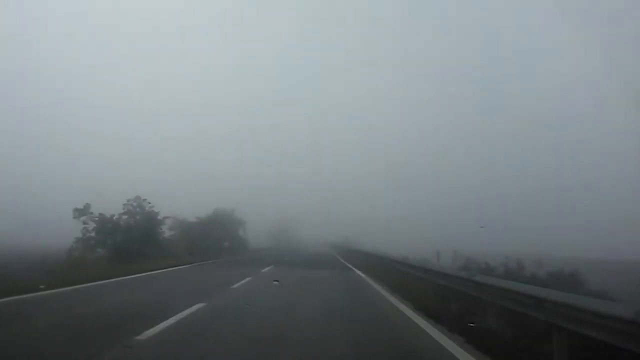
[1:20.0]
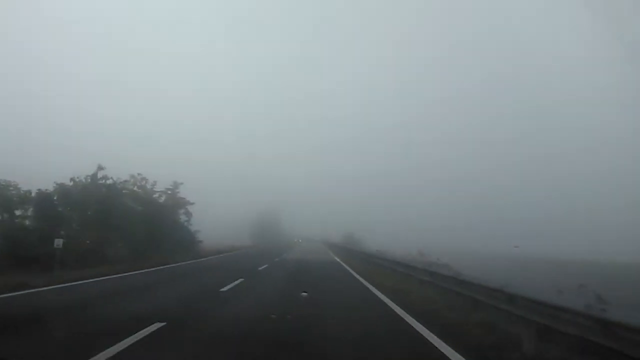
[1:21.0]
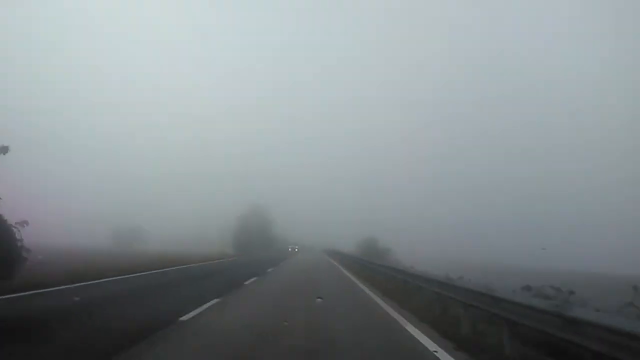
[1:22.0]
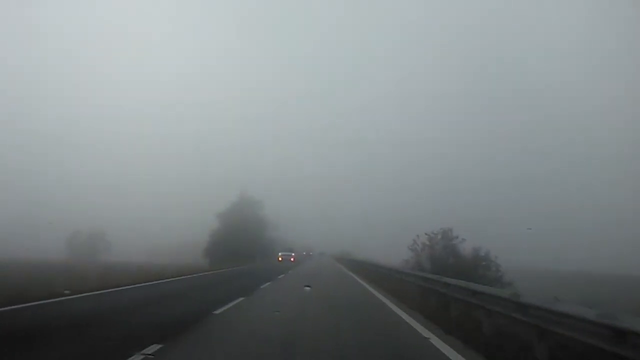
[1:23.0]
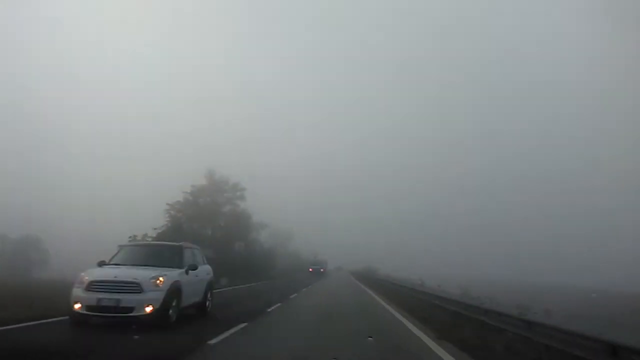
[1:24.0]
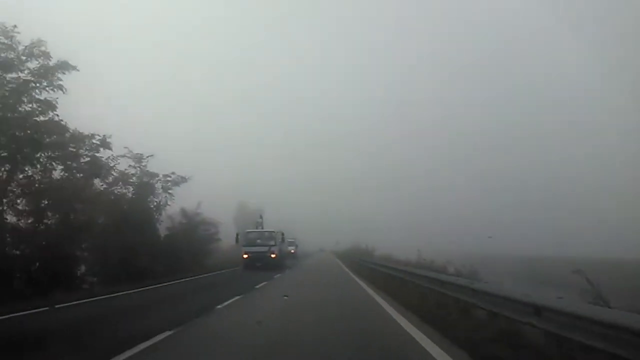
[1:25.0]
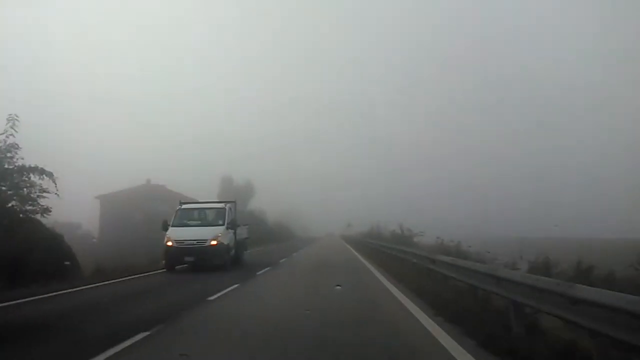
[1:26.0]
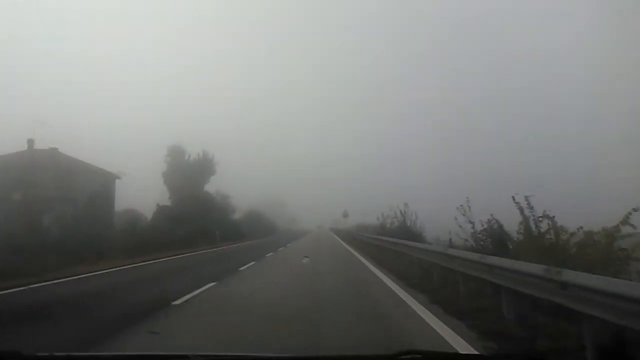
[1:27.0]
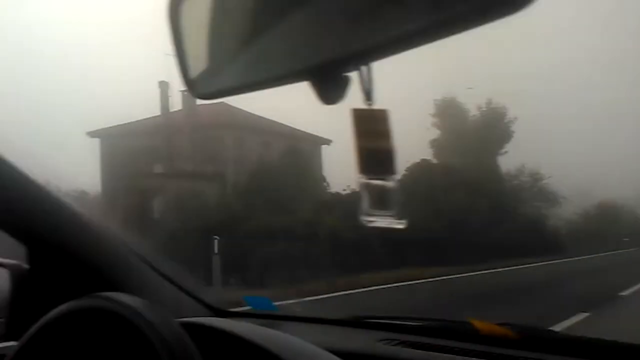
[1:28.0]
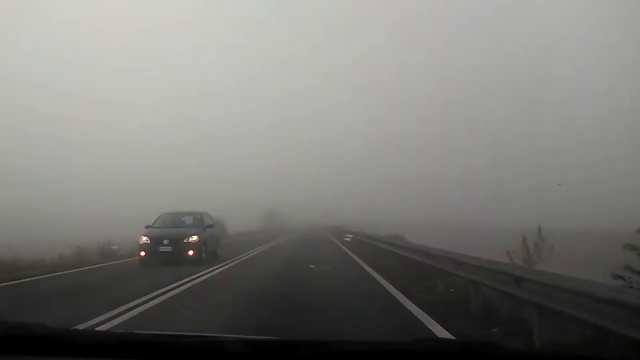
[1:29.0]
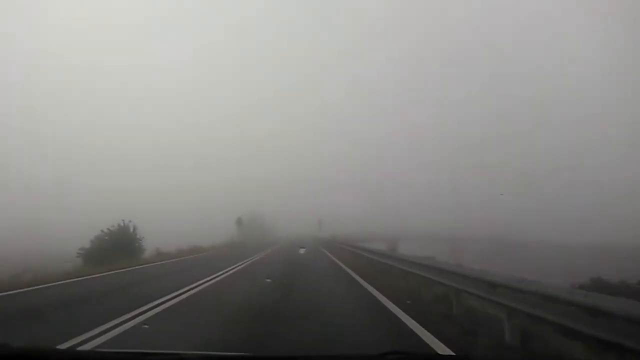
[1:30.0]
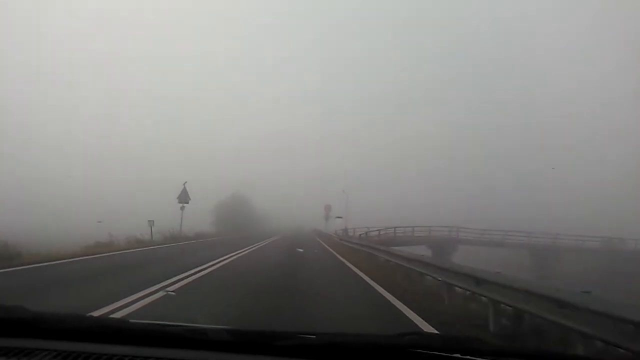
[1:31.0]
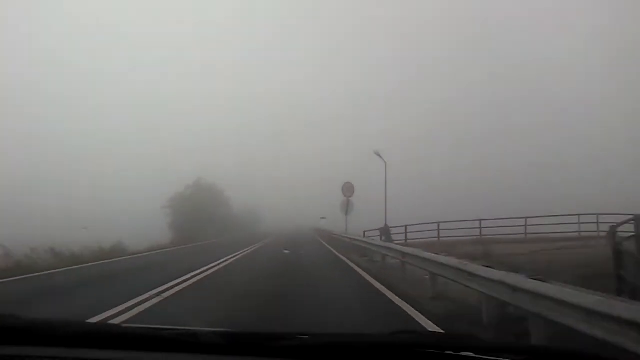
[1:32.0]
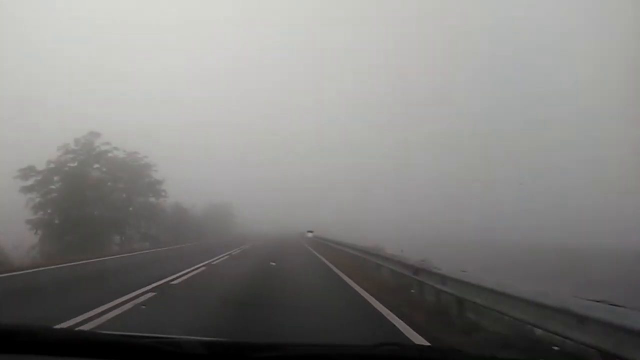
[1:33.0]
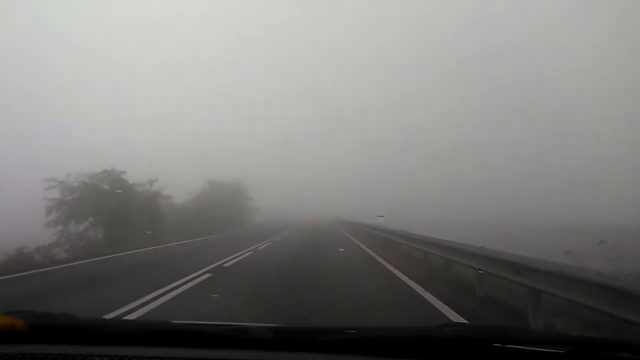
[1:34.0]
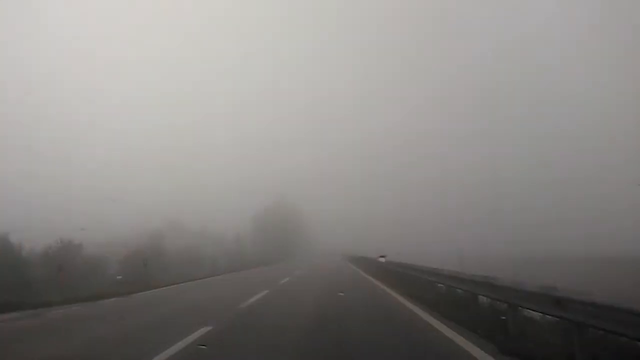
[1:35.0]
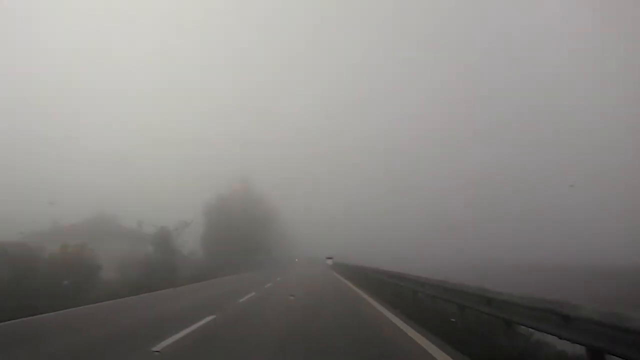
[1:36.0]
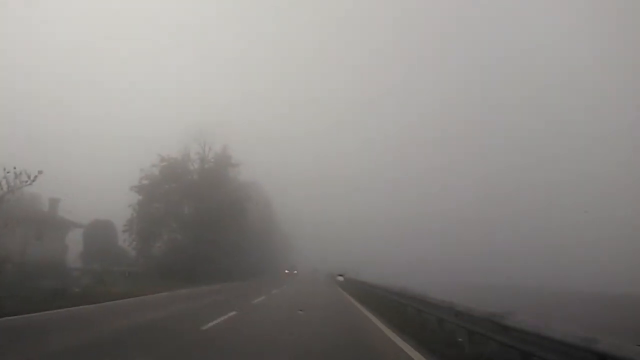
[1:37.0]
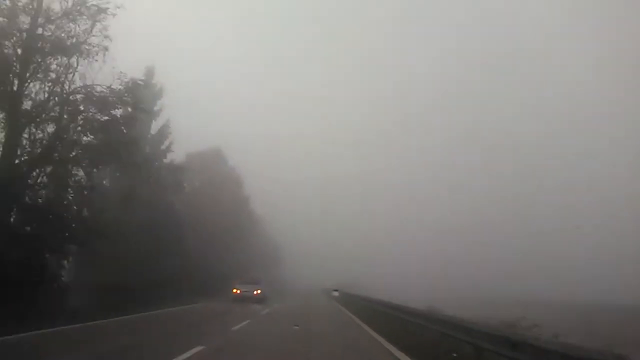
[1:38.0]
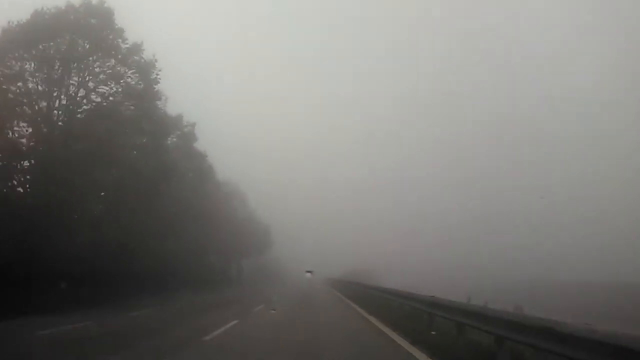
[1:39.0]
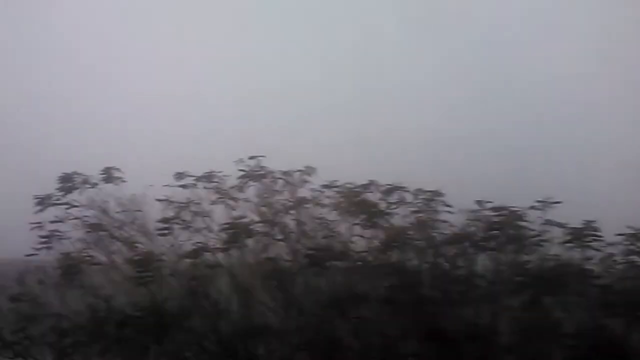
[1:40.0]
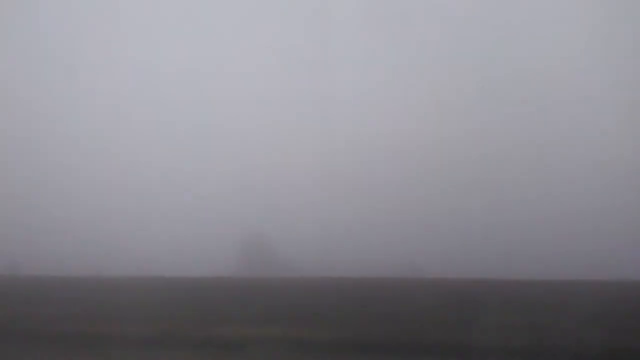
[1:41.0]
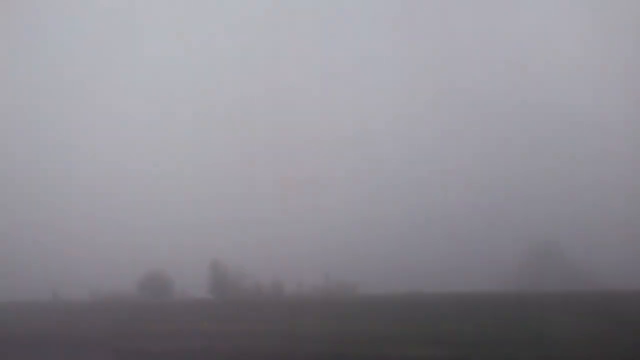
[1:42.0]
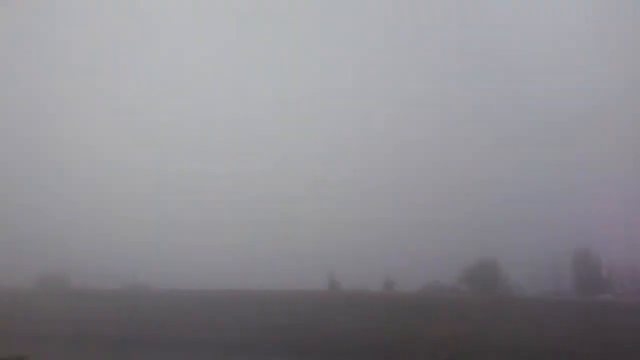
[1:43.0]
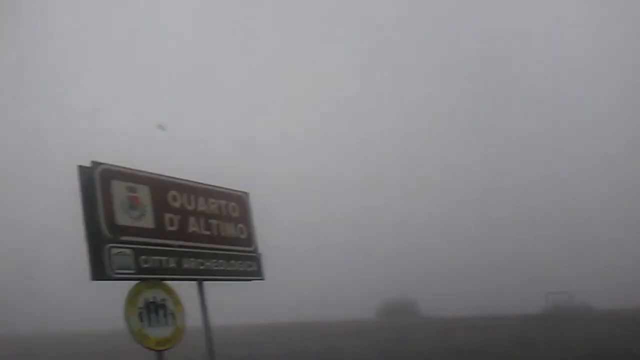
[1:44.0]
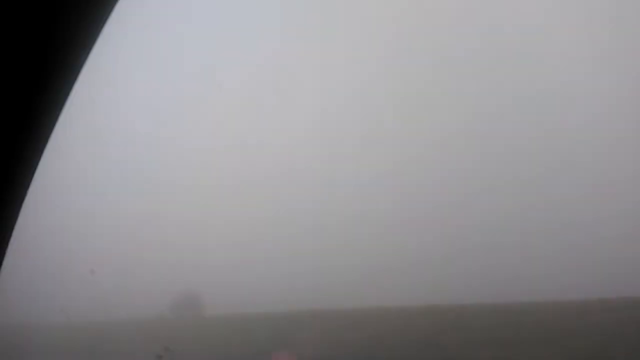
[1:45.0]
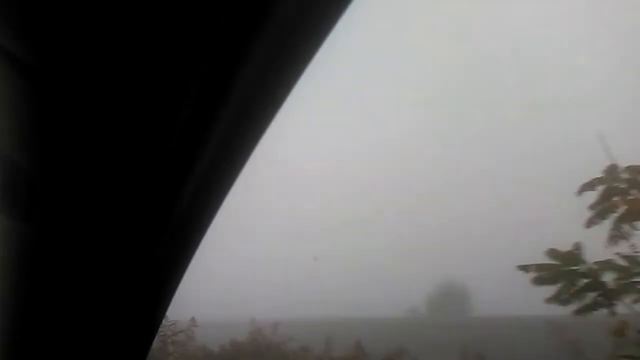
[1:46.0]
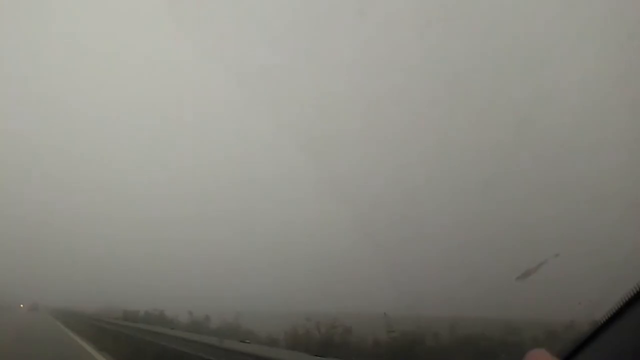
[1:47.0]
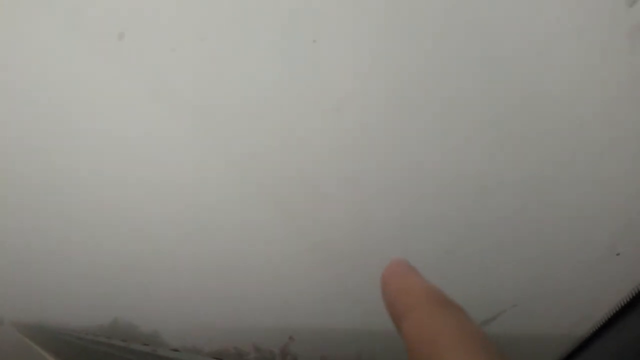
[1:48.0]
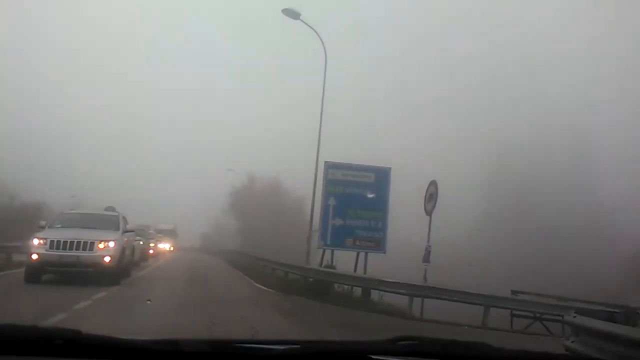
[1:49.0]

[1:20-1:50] The camera is kind of shaking, as though someone is holding it, and the person filming appears to be sitting in the passenger seat of a moving vehicle, filming forward through the windshield. It is very foggy outside, either early morning or late evening. The road is a two-way street, with cars coming on the left zooming by pretty fast with their headlights on. The driver is a male, probably in his 20s, smiling, with a bulbous nose, glasses, a goatee, dark hair and a ball cap. He turns his head to the right as the camera swings to the left toward him, acknowledging the camera. The camera goes back to the front, filming the moving road ahead. The windshield shows water on it, so it is possibly raining and not just foggy. When the camera looks off to the right, wide open fields and a very foggy, misty sky are visible.